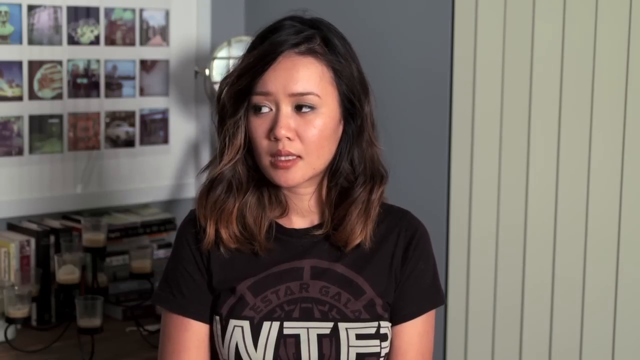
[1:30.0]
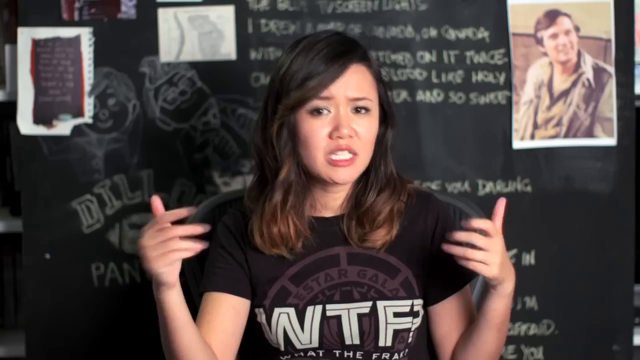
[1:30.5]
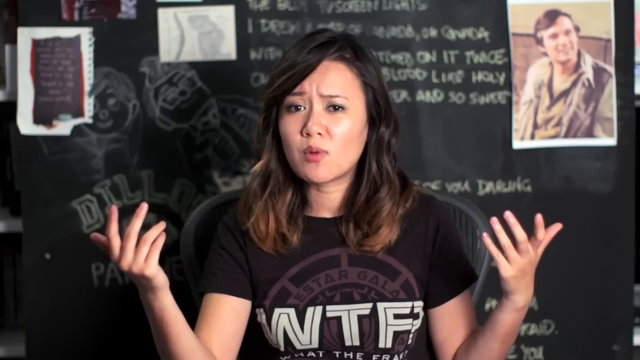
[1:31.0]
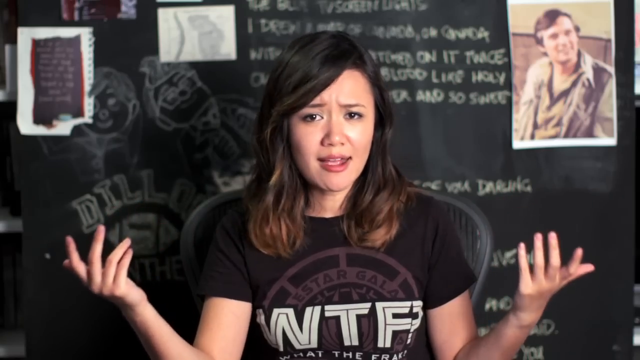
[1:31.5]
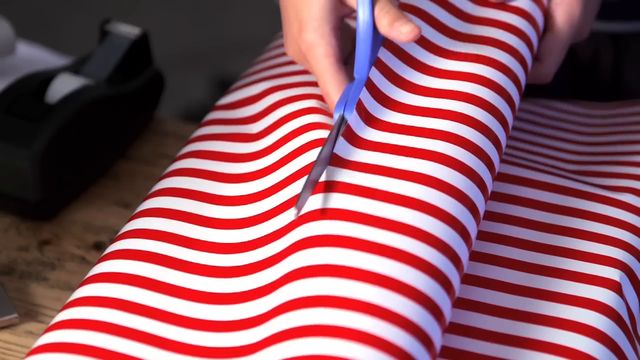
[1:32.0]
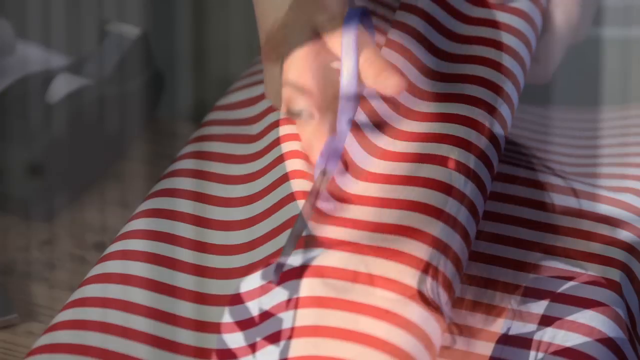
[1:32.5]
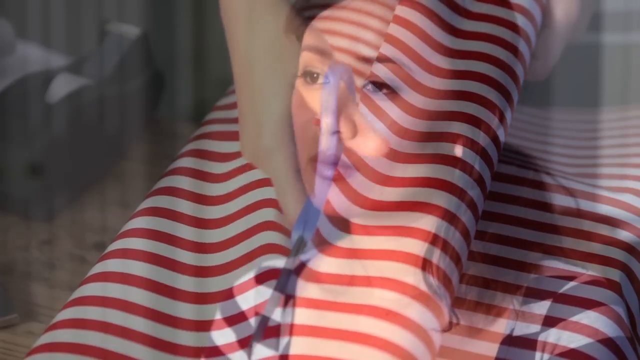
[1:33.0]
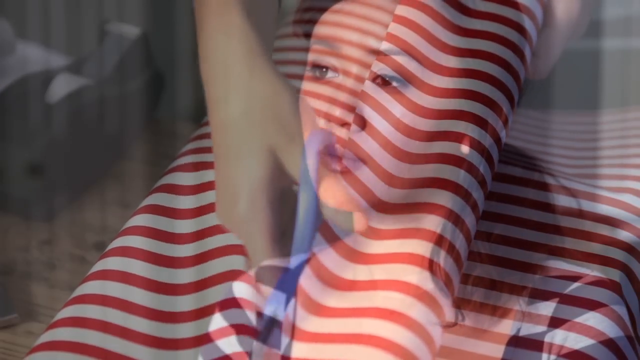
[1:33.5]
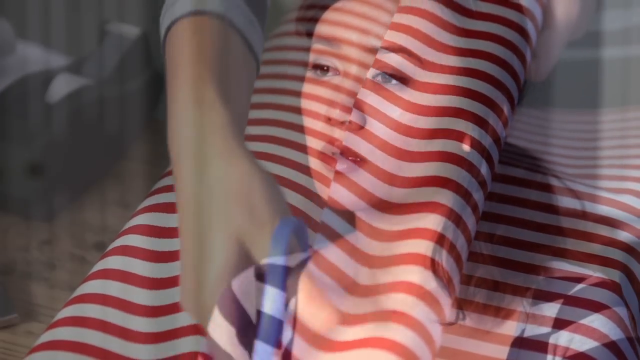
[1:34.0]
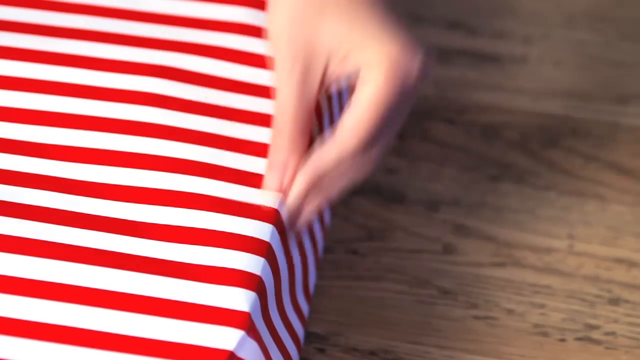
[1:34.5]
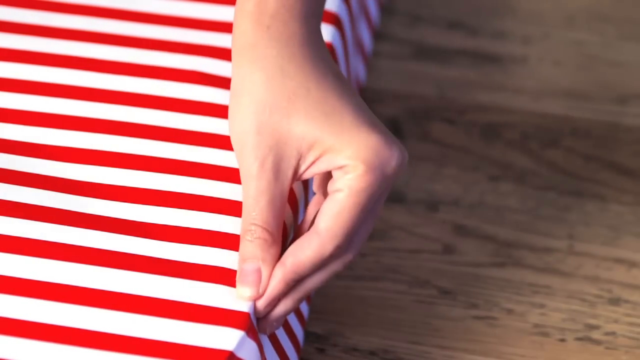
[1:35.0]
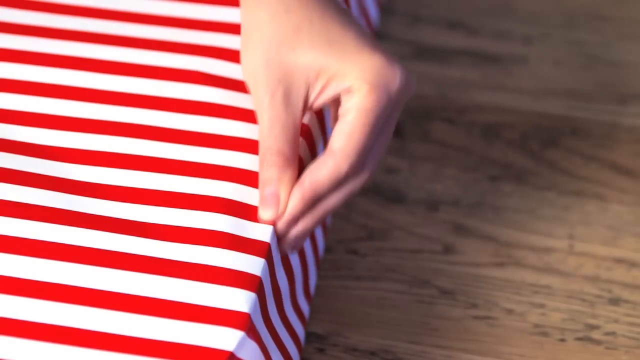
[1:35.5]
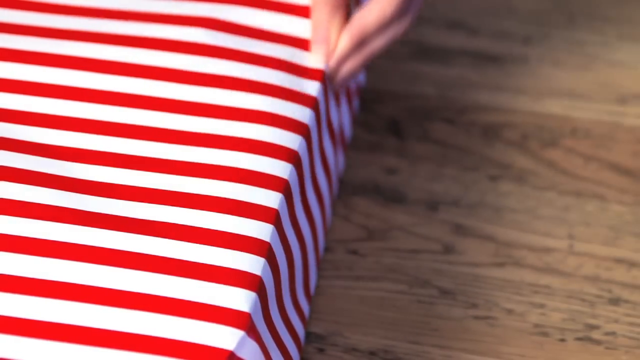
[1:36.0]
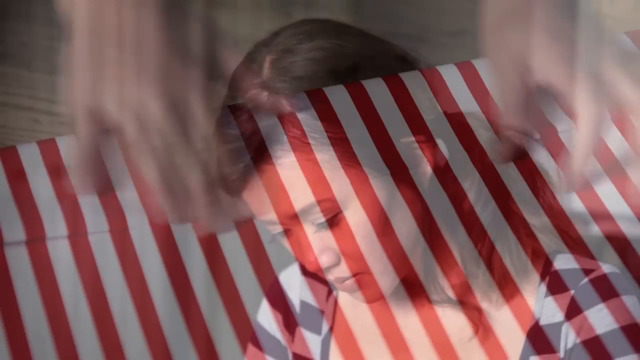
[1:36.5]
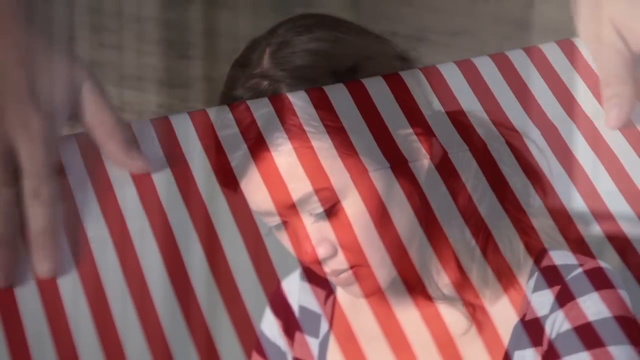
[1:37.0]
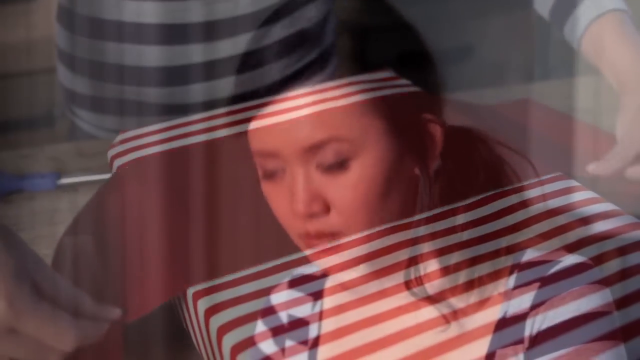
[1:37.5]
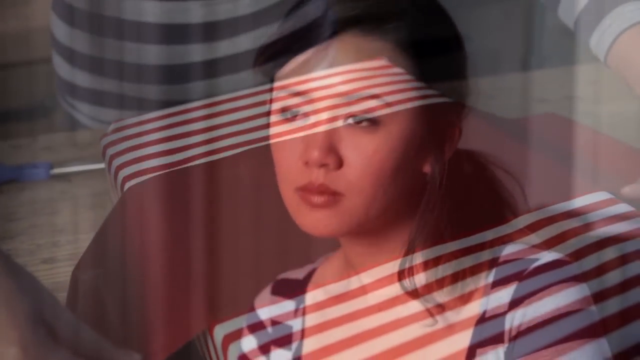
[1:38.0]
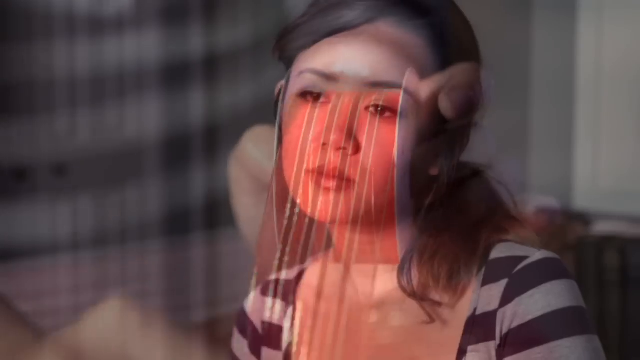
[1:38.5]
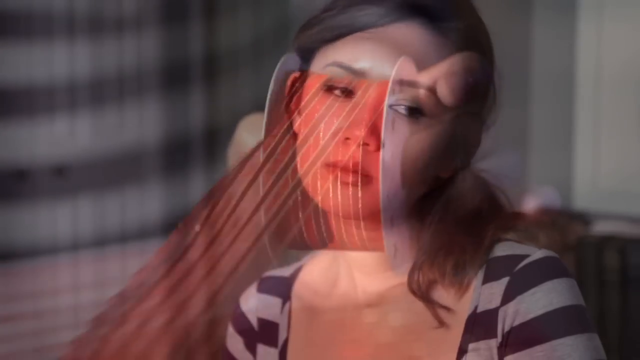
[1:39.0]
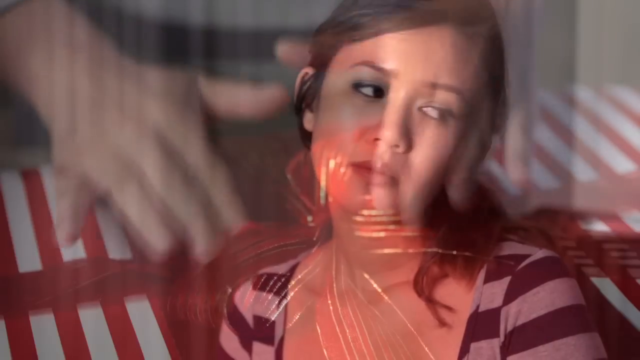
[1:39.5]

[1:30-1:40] The girl talks, and wrapping paper is cut while the other girl stays kind of behind the wrapping paper. A thick red band is put on the wrapping paper and a red bow is tied. The first girl talks again, and the paper is cut and kind of sealed, a thick red something is put on it, and the bow is tied, repeating over and over. The wrapping paper is in front of the girl but kind of transparent, so her face can be seen through it as it is cut and as the thick part and the bow are put on. She still looks unhappy, and she unwraps the gift. The first girl talks, and the shots return to the paper being cut with the girl's face behind it, the box without her face behind it, the extra red being added and the red ribbon being tied into a bow with her face behind it.